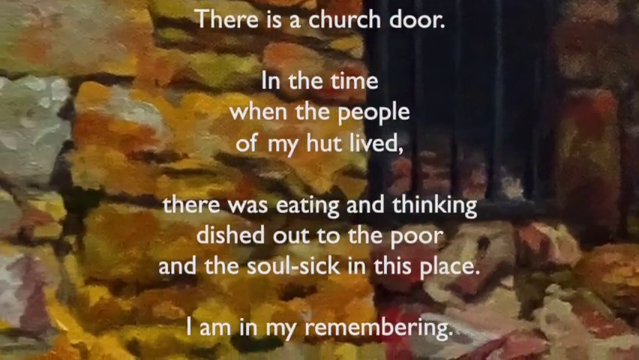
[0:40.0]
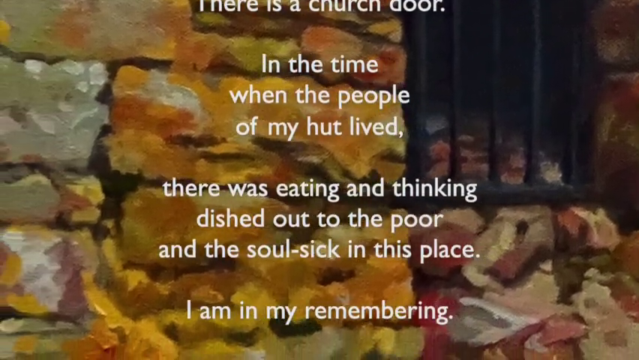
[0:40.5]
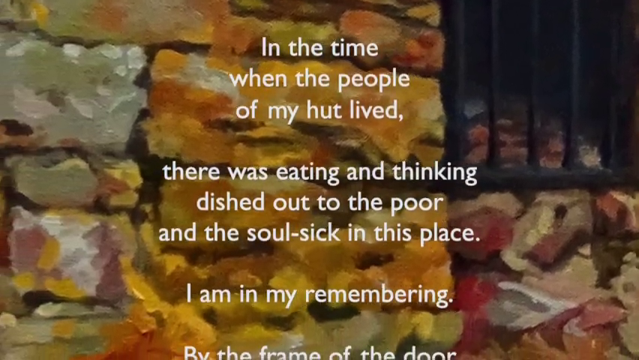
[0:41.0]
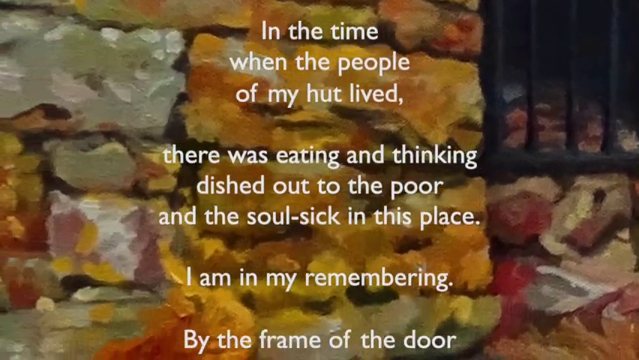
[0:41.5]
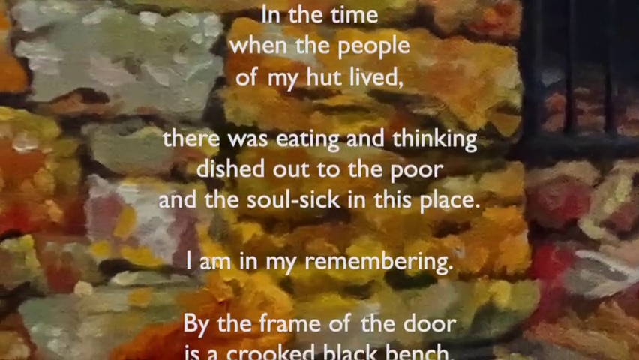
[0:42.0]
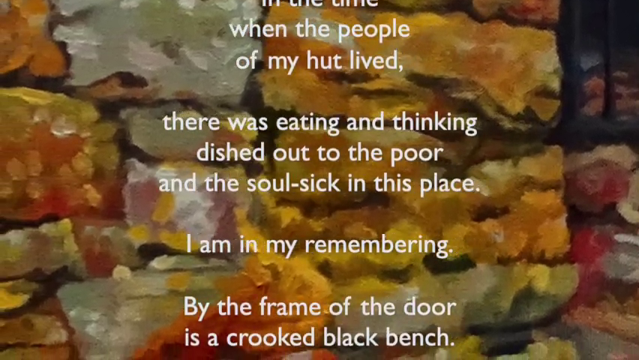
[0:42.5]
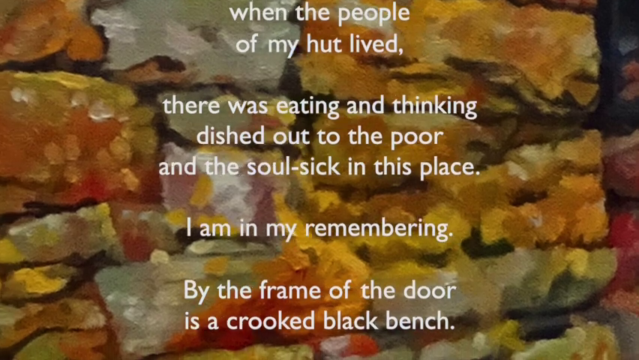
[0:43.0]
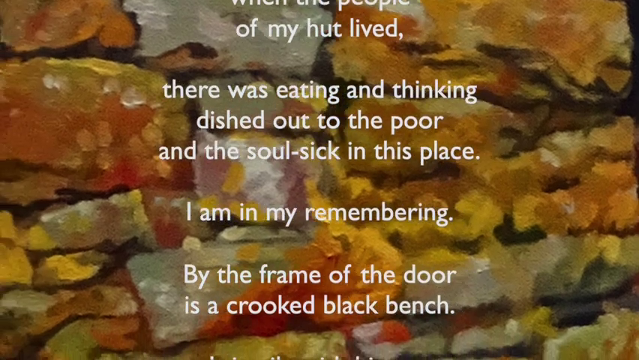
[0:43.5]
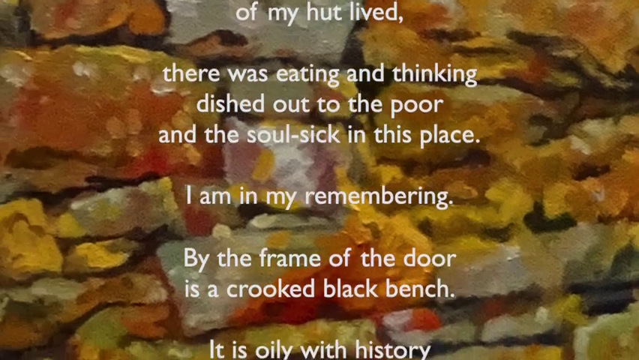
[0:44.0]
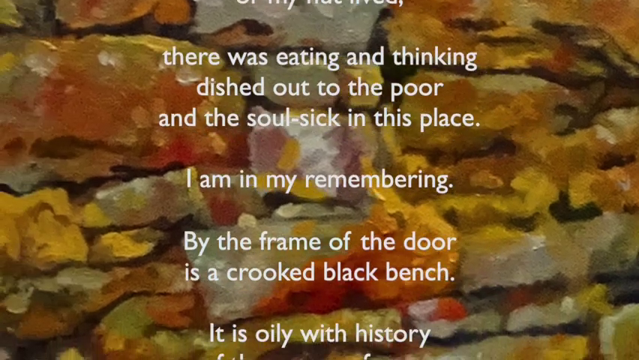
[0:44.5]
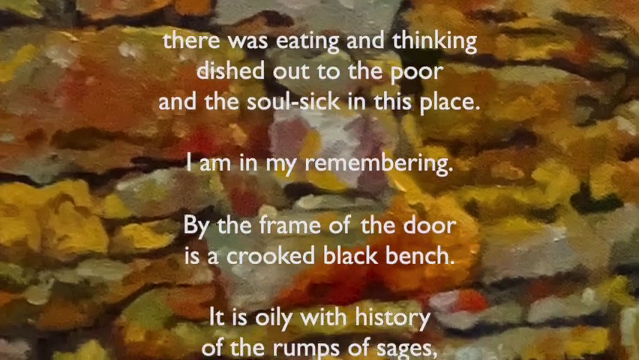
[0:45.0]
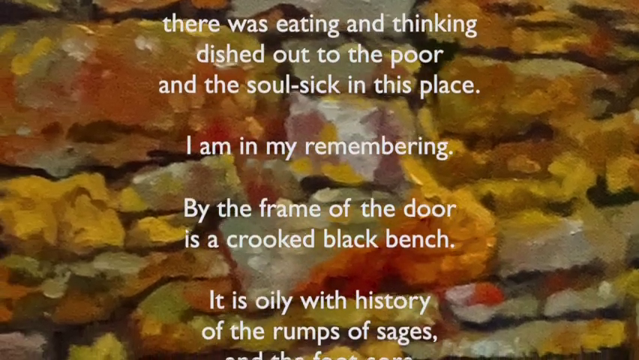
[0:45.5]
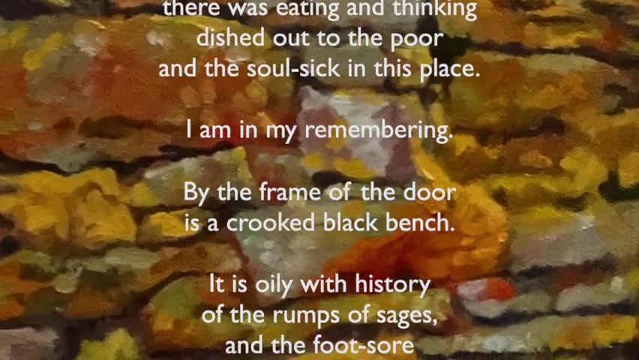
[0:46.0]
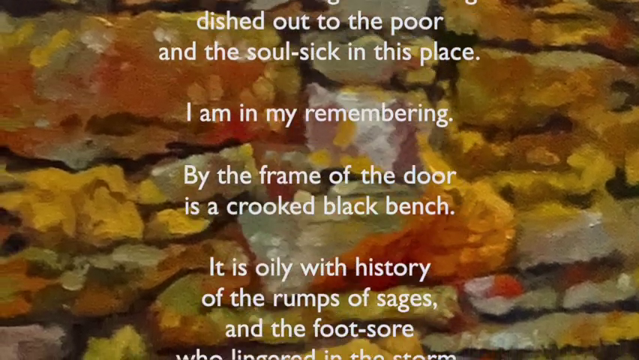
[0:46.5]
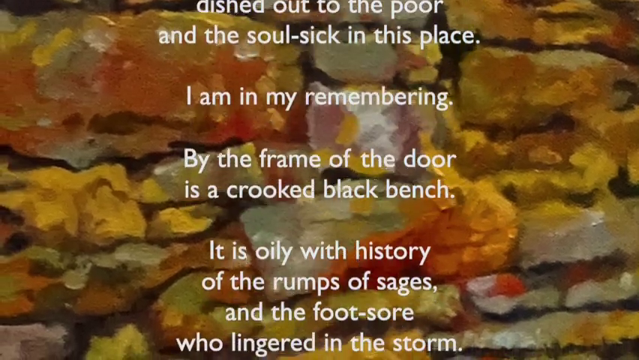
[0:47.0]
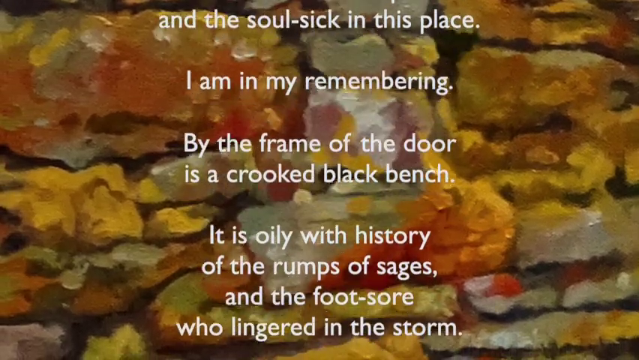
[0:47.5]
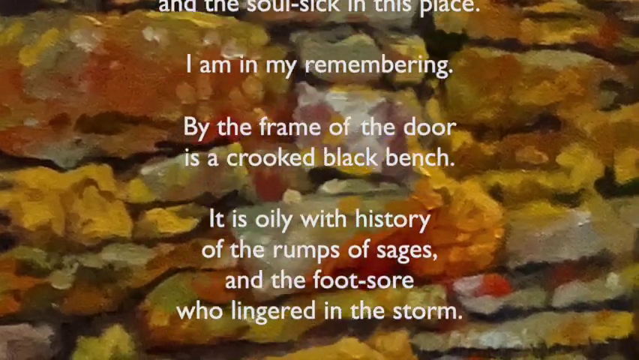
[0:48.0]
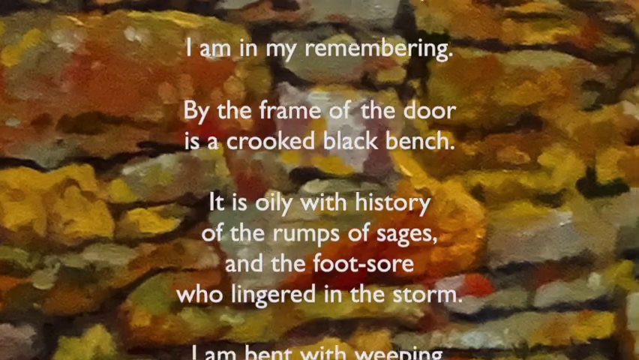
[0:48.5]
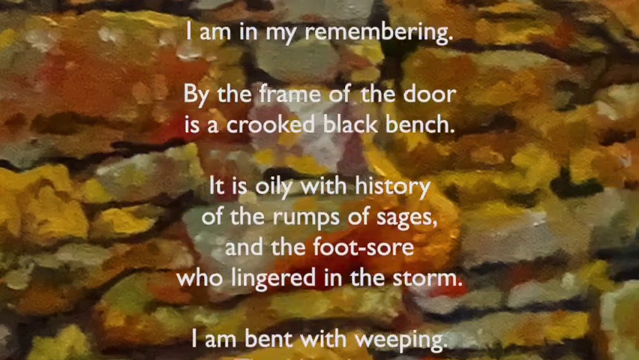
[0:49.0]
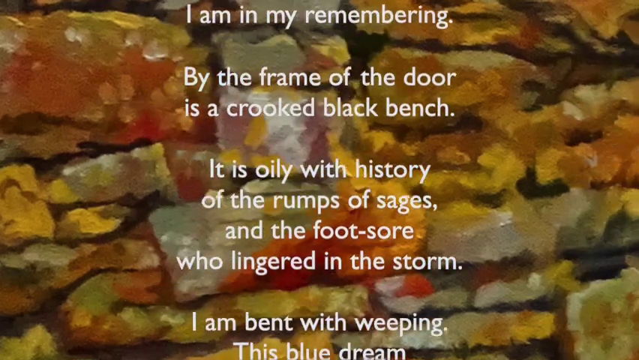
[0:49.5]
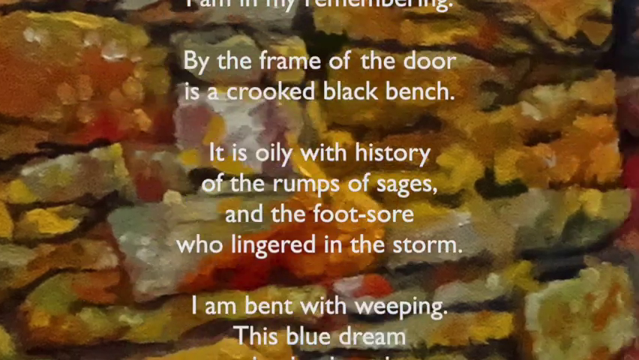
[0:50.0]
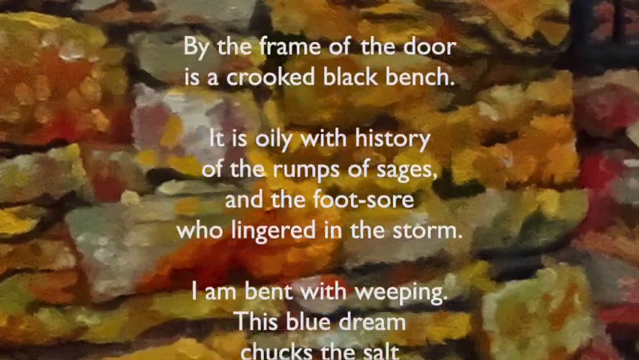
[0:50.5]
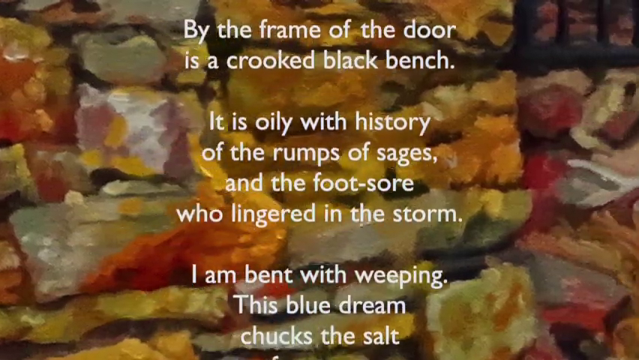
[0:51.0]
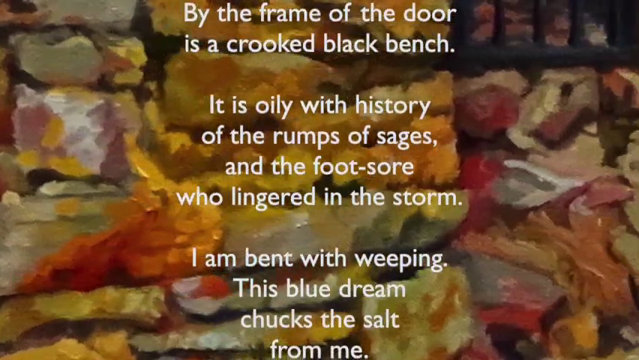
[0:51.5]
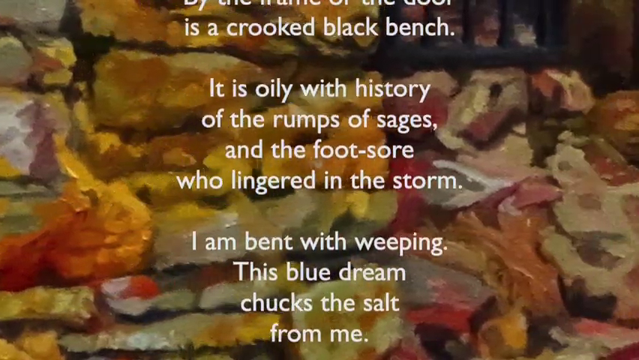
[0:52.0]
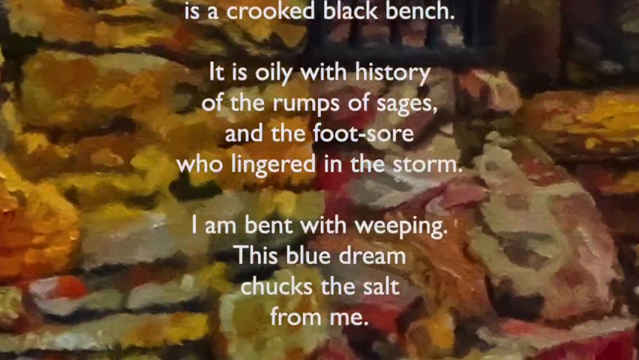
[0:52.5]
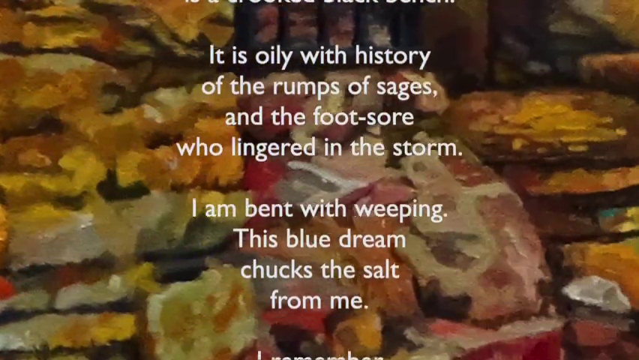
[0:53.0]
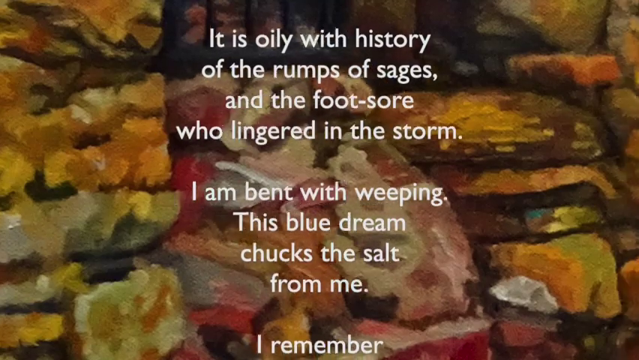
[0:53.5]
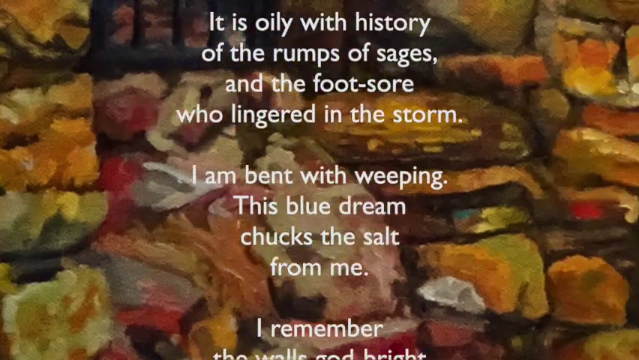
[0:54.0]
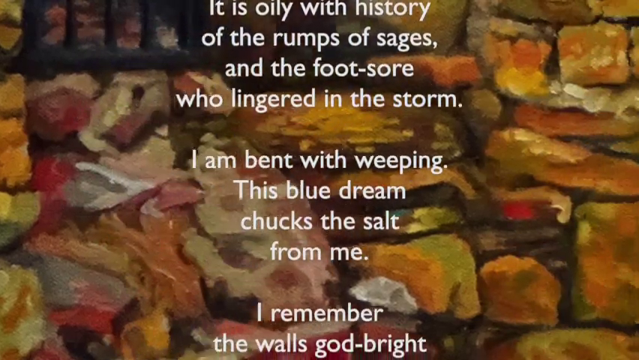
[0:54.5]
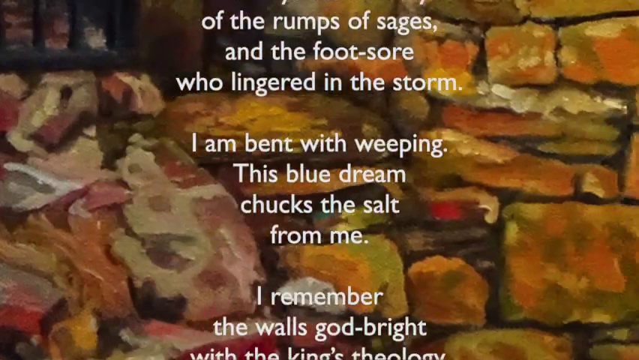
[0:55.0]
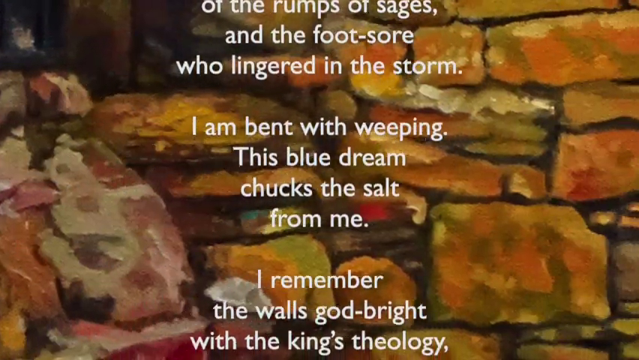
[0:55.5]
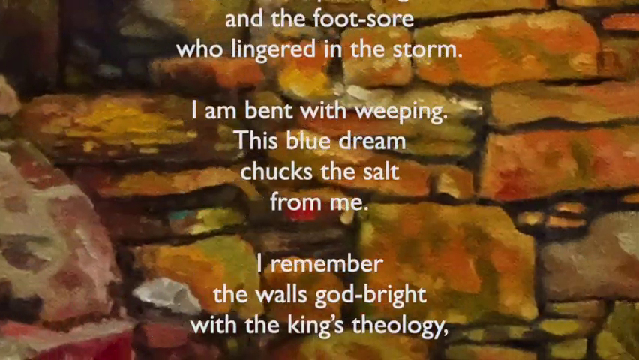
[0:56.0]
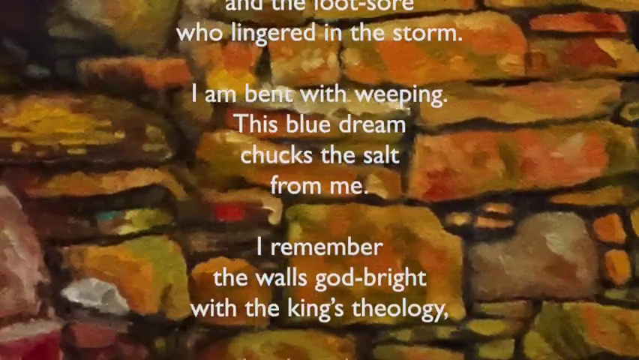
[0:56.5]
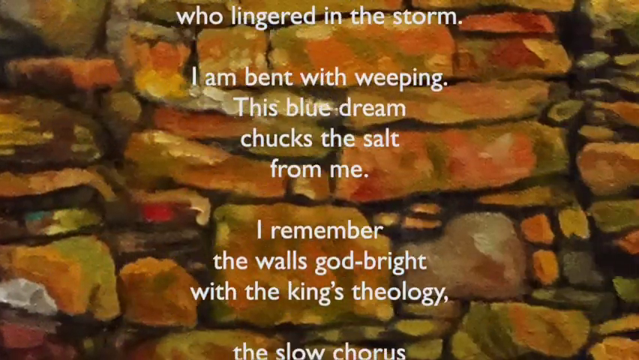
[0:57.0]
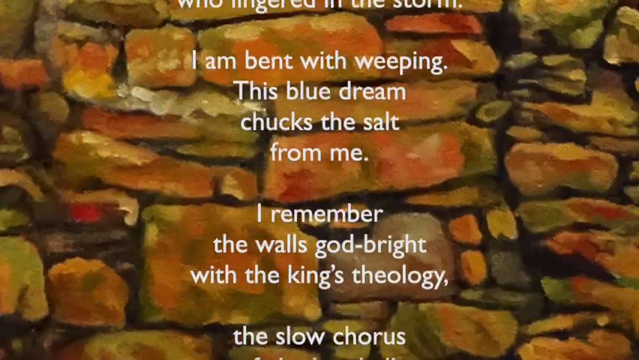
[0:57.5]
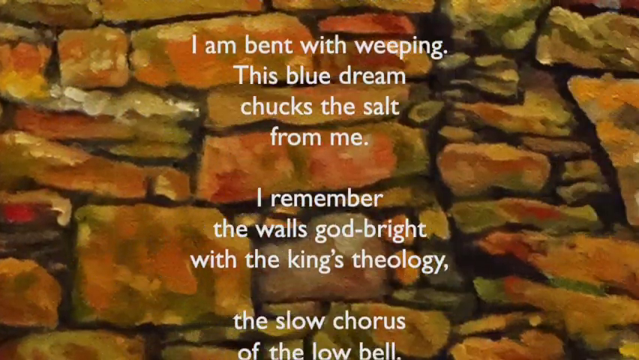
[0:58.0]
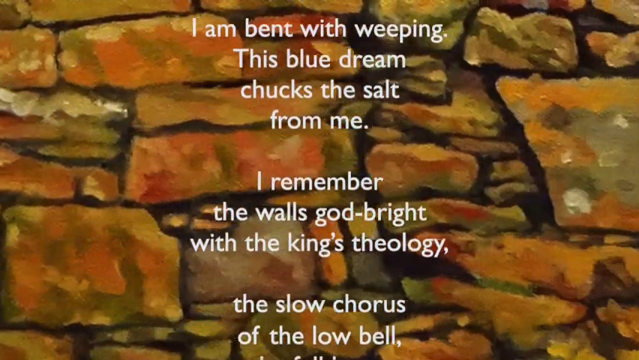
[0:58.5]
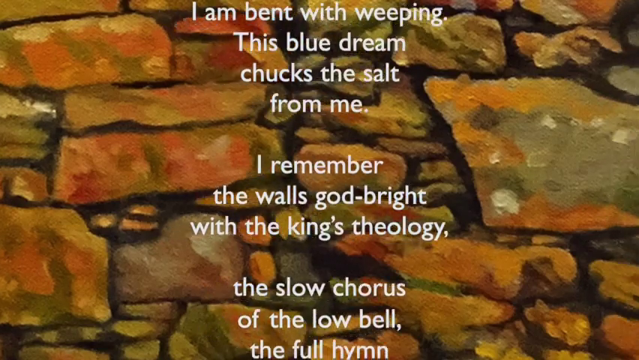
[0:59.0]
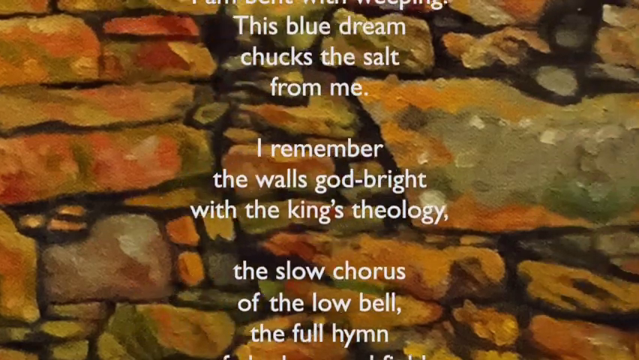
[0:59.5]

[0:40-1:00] The poem continues on screen: "I am remembering, by the frame of the door is a crooked black bench, it is oily with history of the rumps of sages, and the foot sore who lingered in the storm. I am bent with weeping, this blue dream chucks the salt from me. I remember the walls got bright with the king's theology. The slow chorus" before the rest moves off the screen. A close-up of the building shows the black grates of the window and the stone cobbles, concentrating on the orangish red color and the painted lines between them; it is clear that somebody has painted this. The poem is written in white and keeps moving upward.